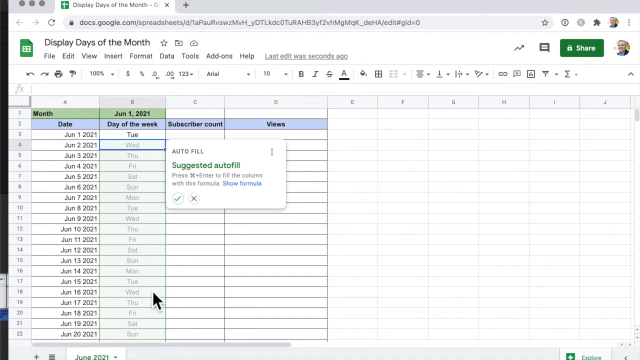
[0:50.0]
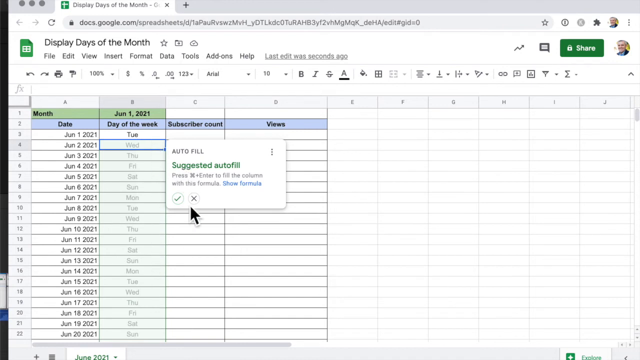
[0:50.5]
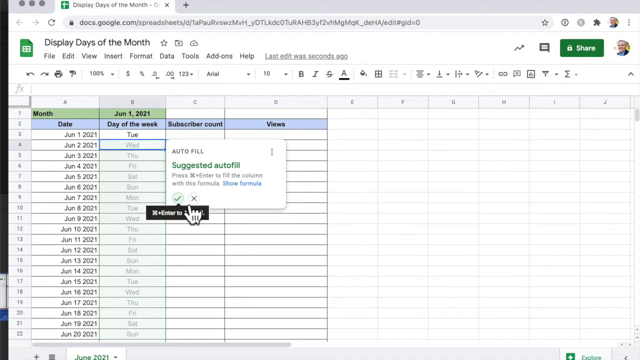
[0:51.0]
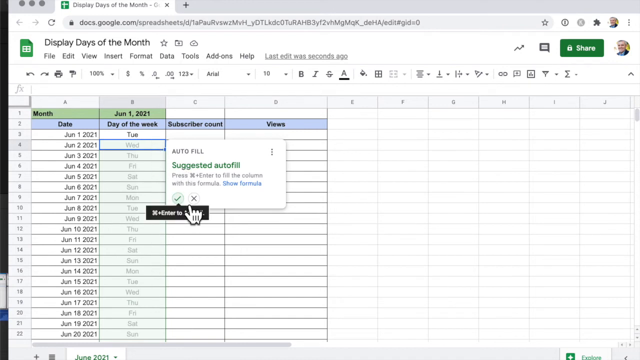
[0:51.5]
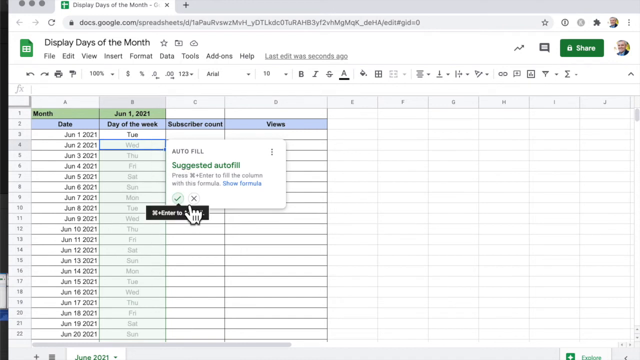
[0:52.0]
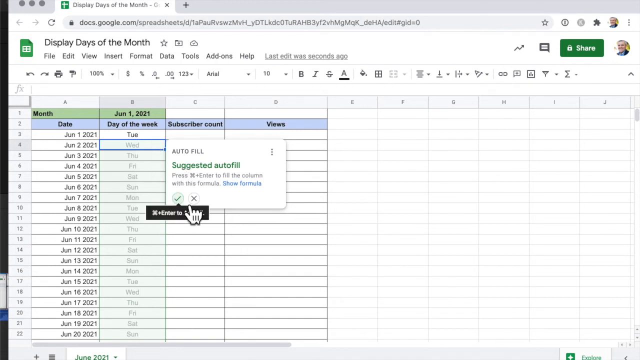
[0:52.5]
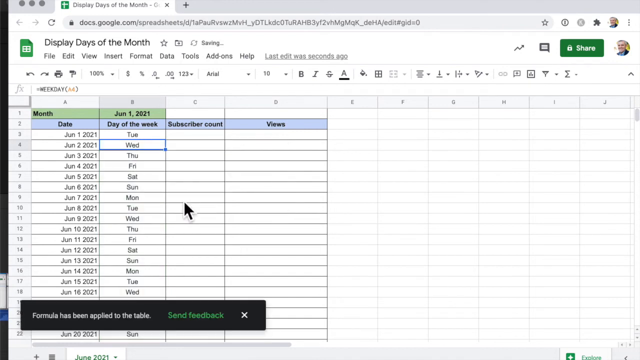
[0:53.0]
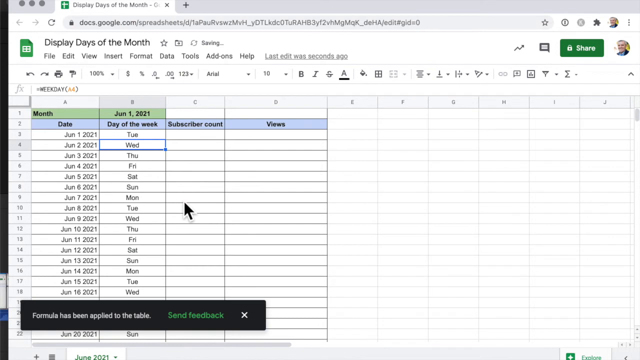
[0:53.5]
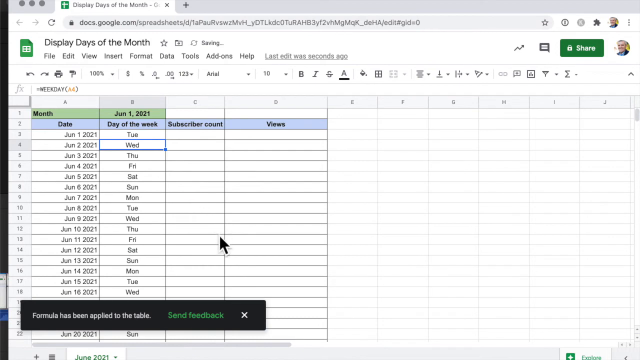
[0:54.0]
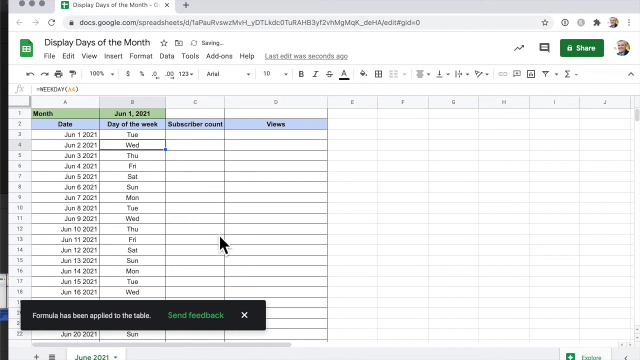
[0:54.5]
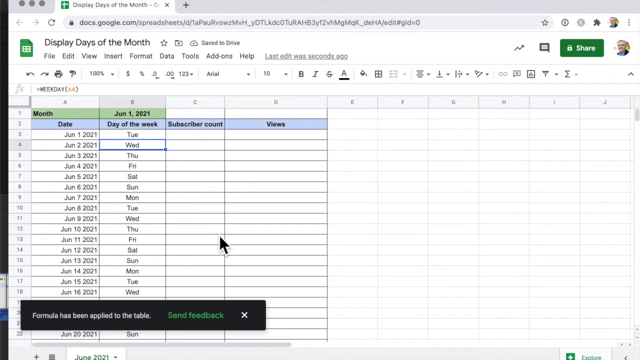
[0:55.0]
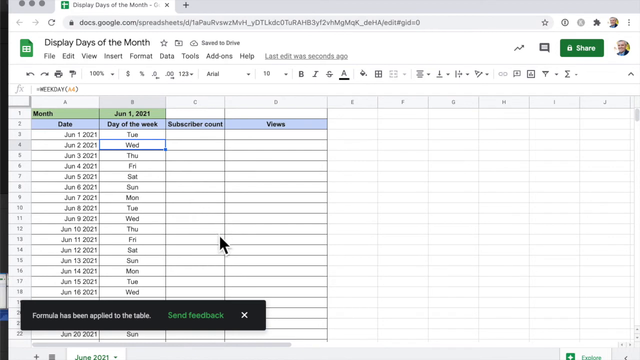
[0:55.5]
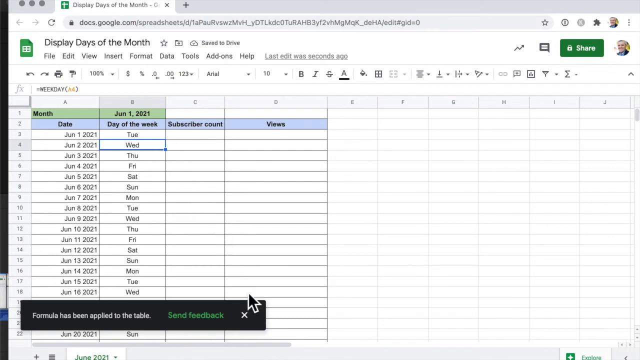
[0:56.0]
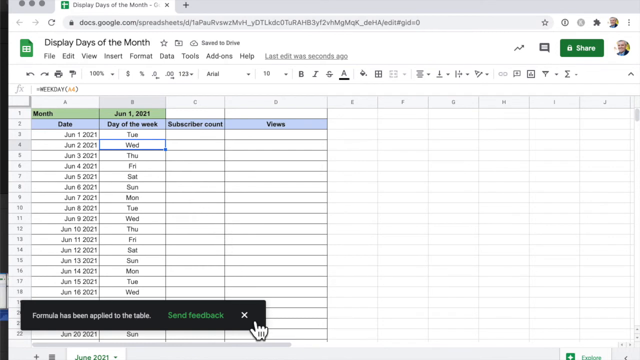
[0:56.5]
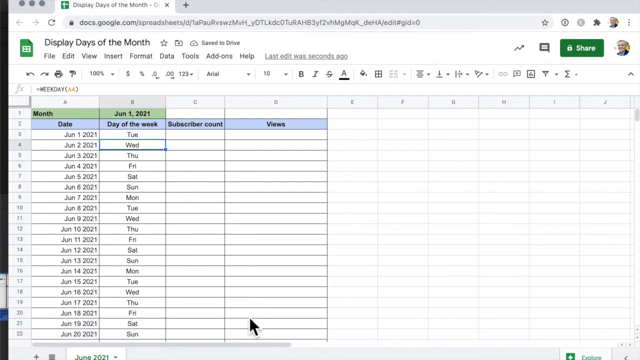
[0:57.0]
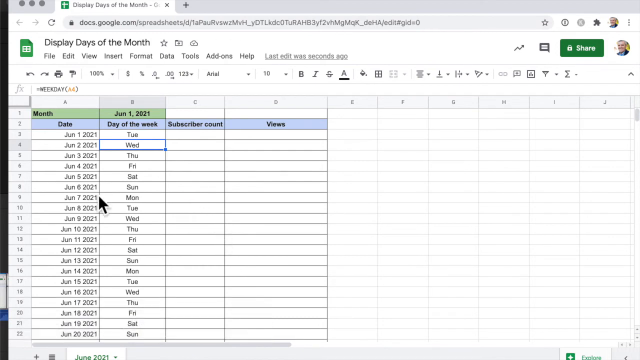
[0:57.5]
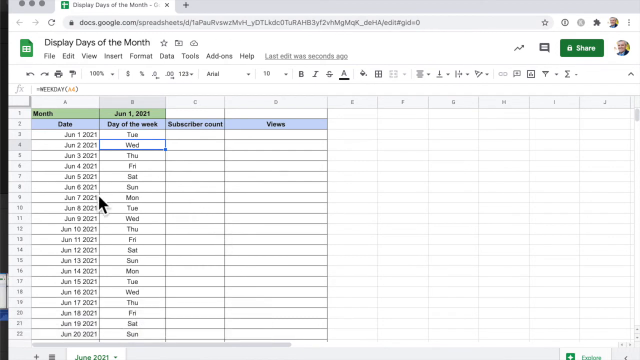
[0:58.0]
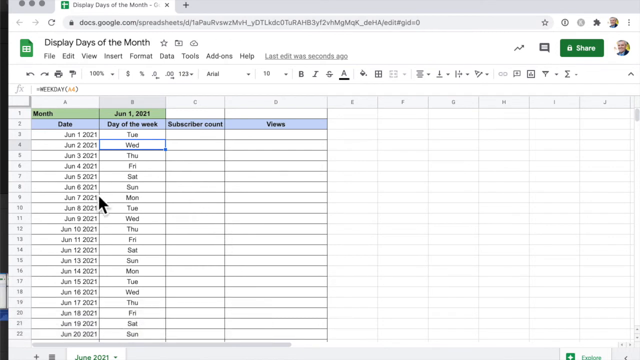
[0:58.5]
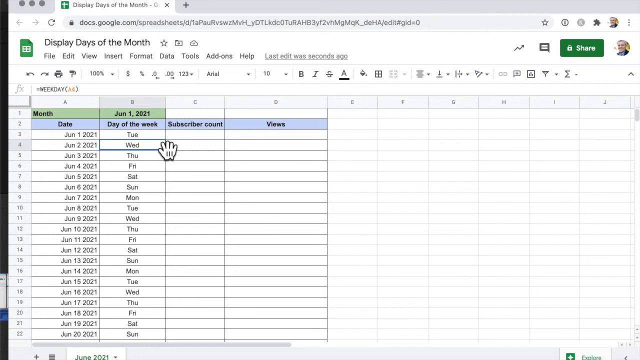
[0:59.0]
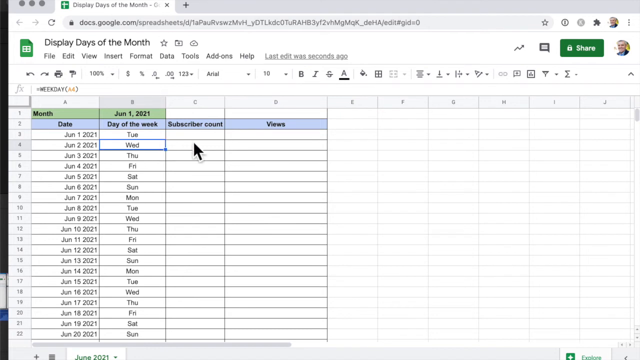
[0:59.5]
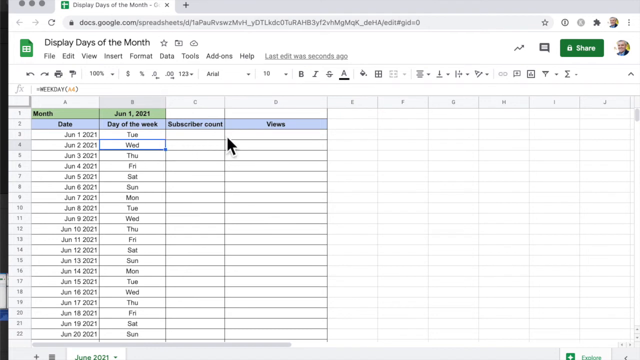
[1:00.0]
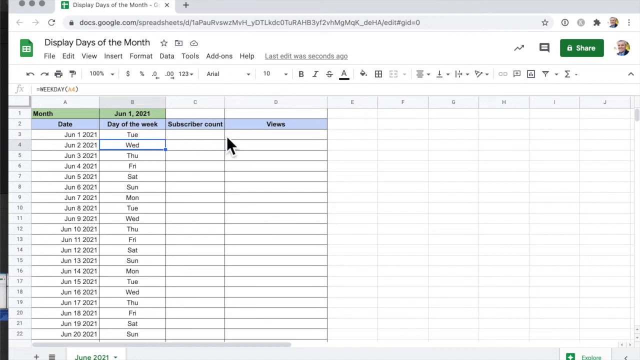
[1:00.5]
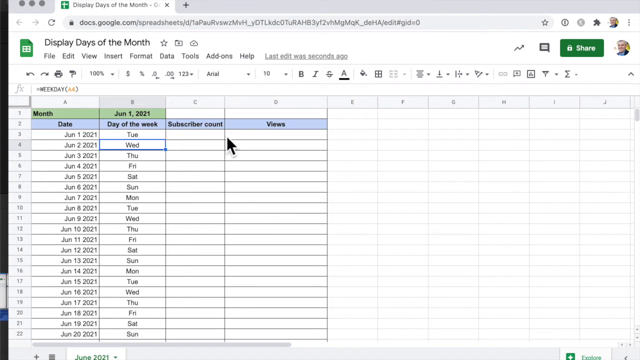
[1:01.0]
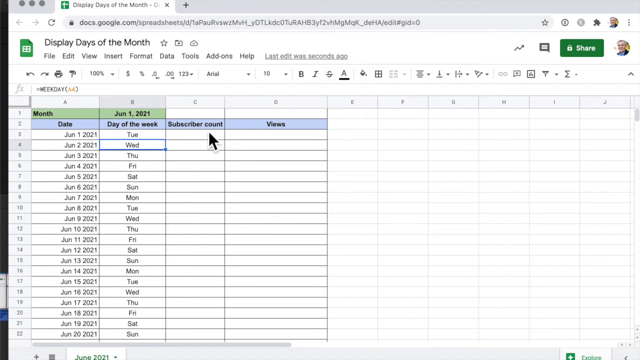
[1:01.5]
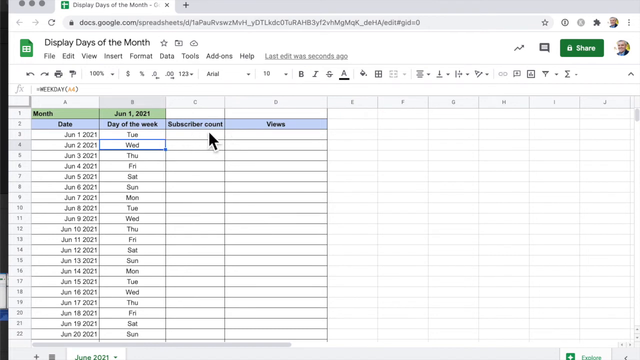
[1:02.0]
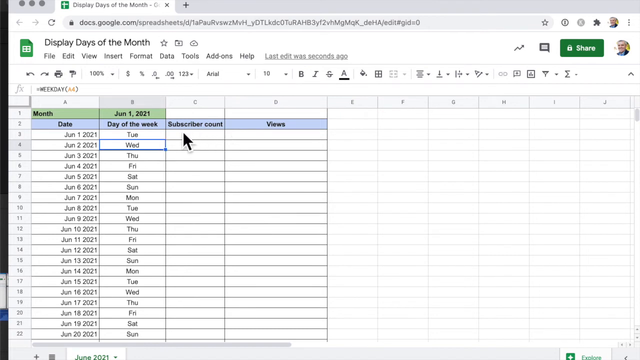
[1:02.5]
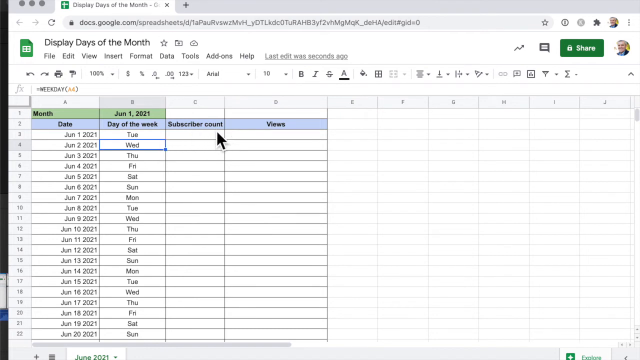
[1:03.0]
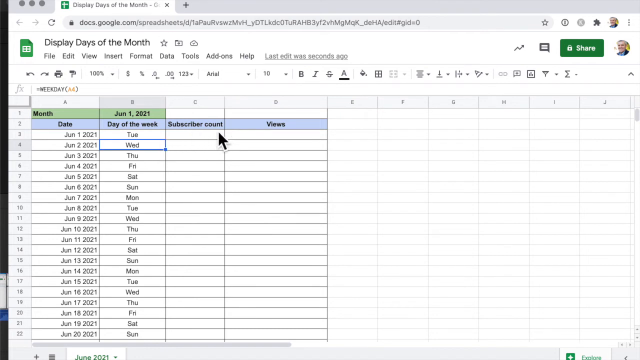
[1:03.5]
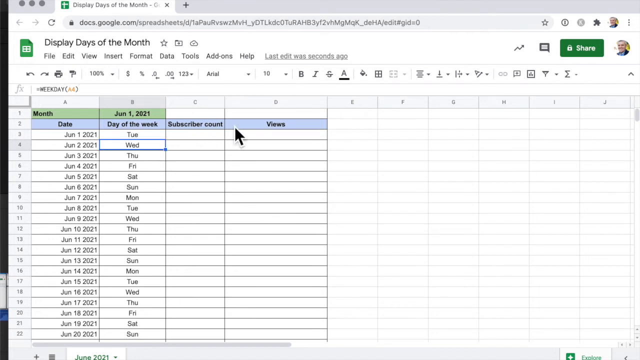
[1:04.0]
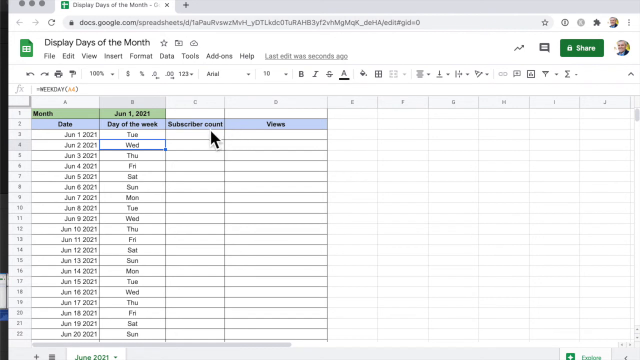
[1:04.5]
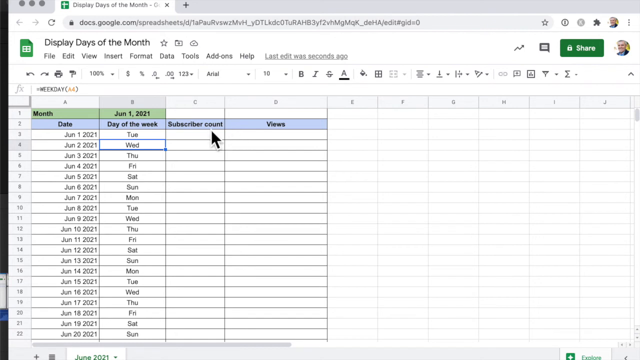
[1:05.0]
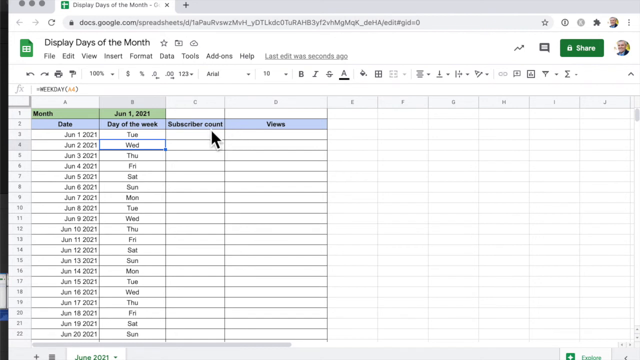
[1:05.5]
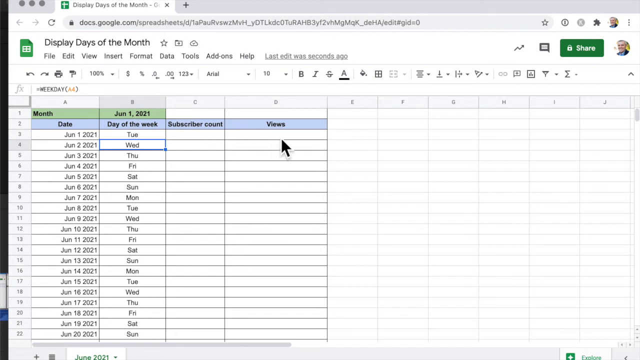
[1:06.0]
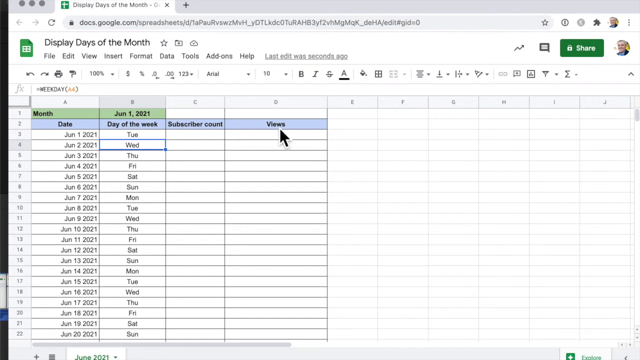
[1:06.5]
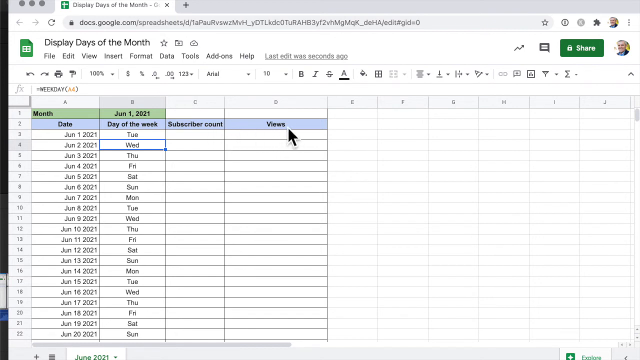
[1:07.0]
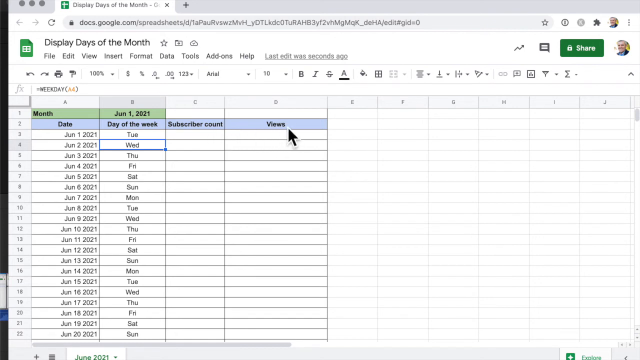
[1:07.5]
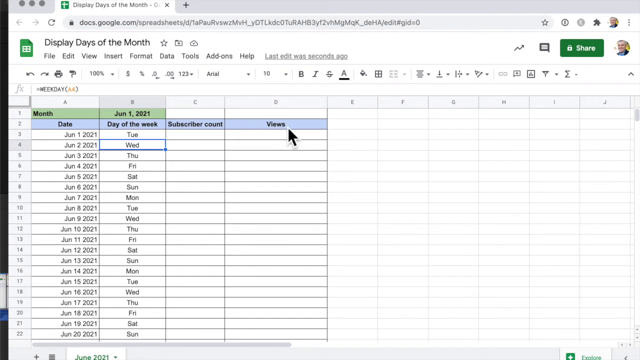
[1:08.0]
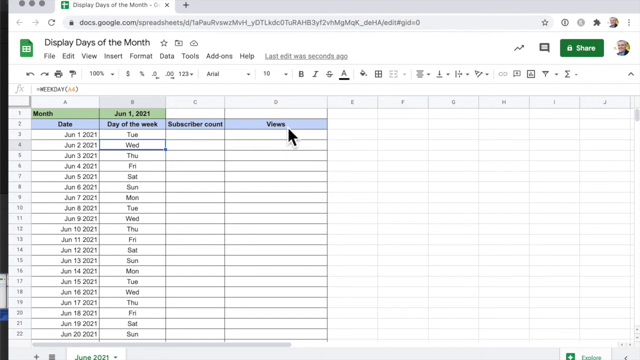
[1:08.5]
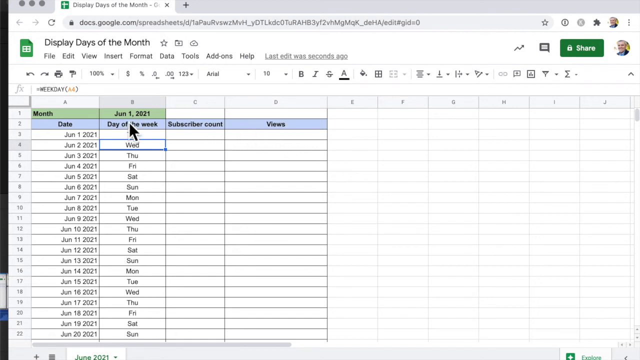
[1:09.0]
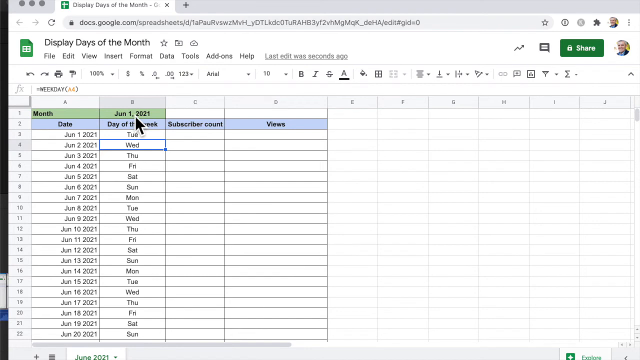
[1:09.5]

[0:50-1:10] A prompt appears offering to autofill the formula that was applied, and the person clicks the notification away. The cursor then moves right to the column that says "subscriber count," clicking and hovering over it and making a circular motion around it, then goes back to the days of the week column, where the cursor is just placed down without anything being done. The cursor also hovers over the views section, the furthest right column, and then pans to the left of the screen, after which nothing else happens.